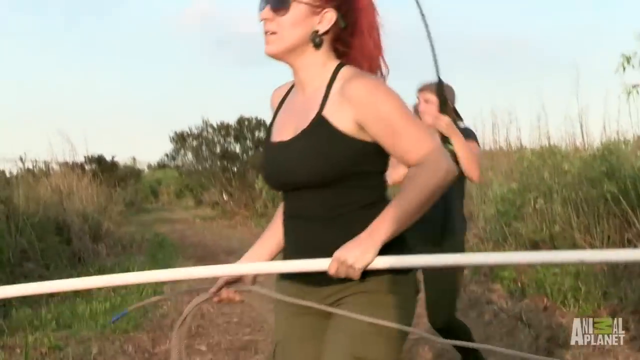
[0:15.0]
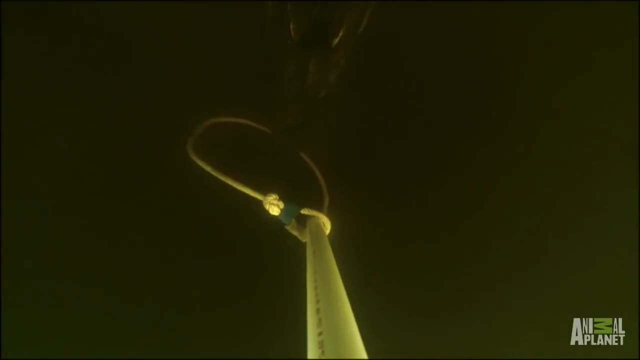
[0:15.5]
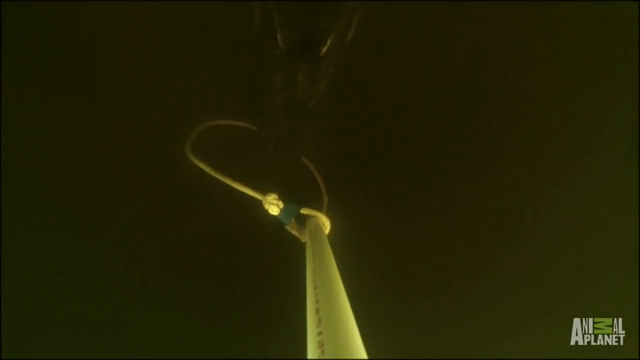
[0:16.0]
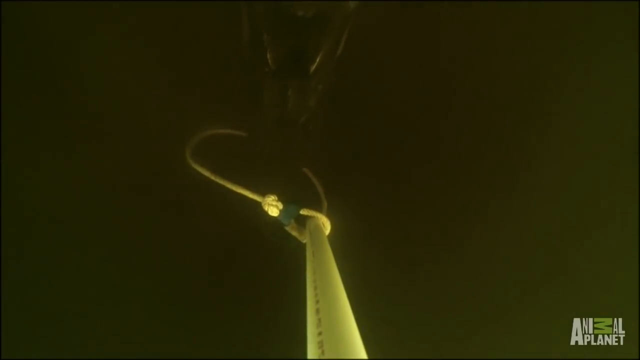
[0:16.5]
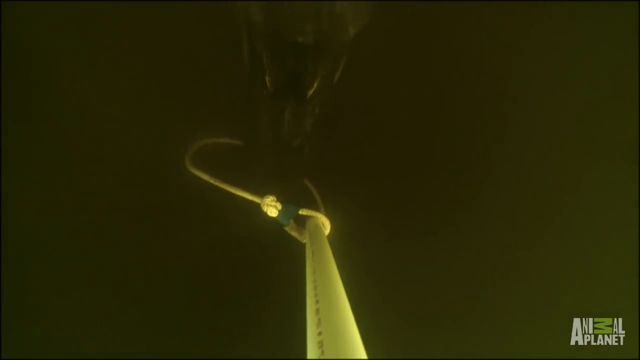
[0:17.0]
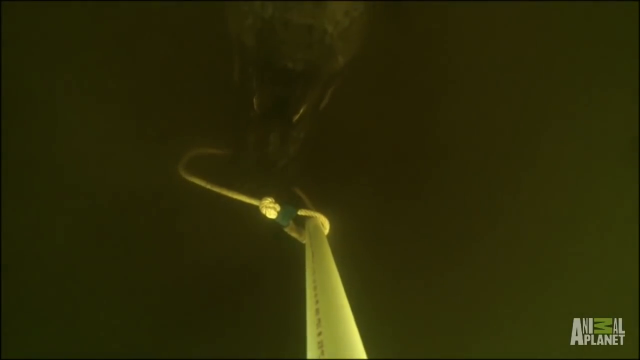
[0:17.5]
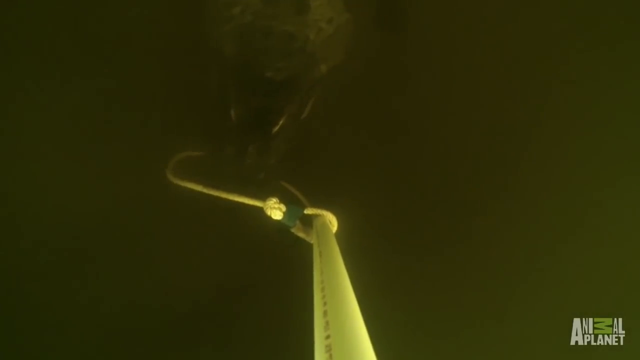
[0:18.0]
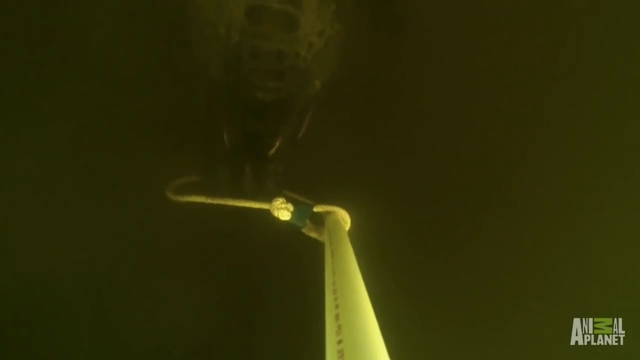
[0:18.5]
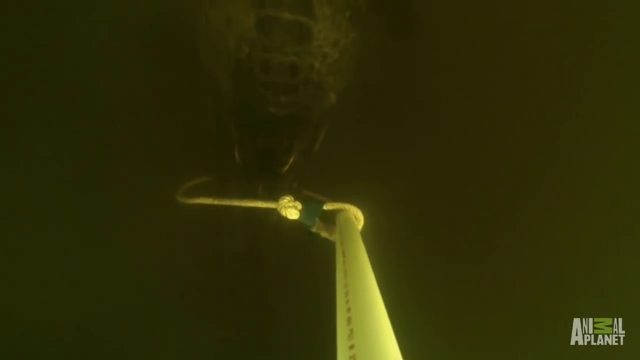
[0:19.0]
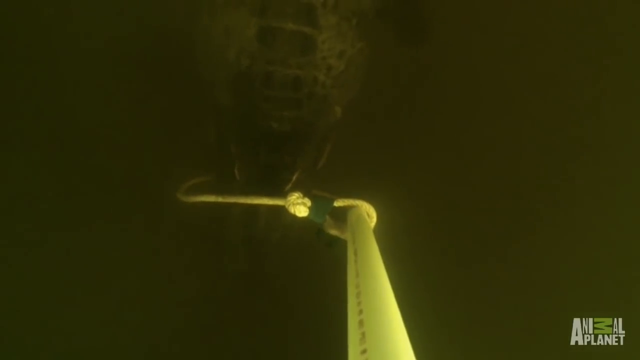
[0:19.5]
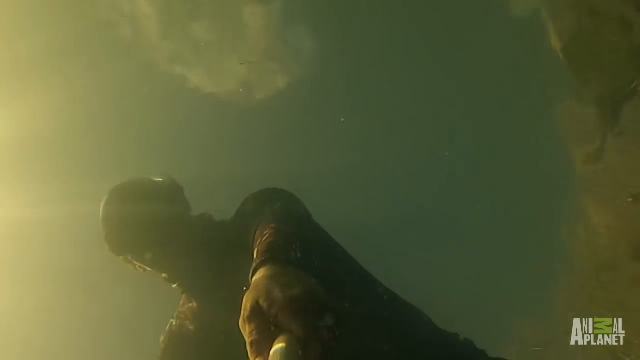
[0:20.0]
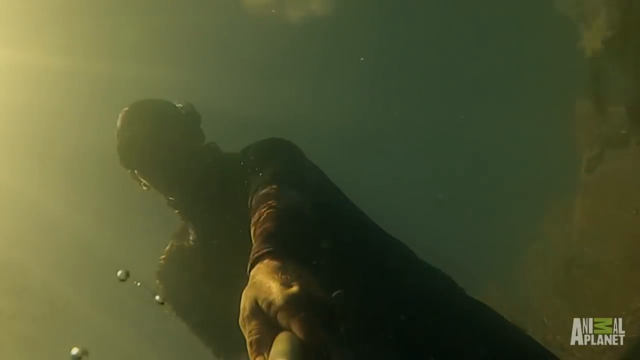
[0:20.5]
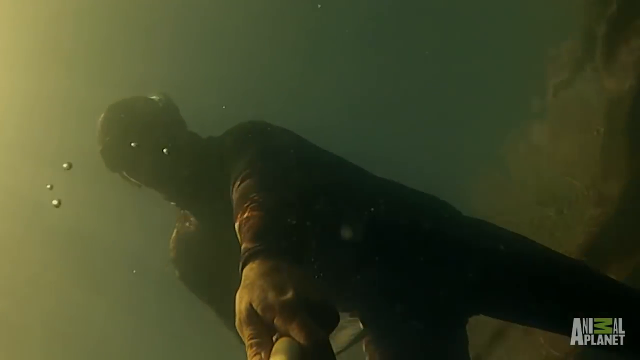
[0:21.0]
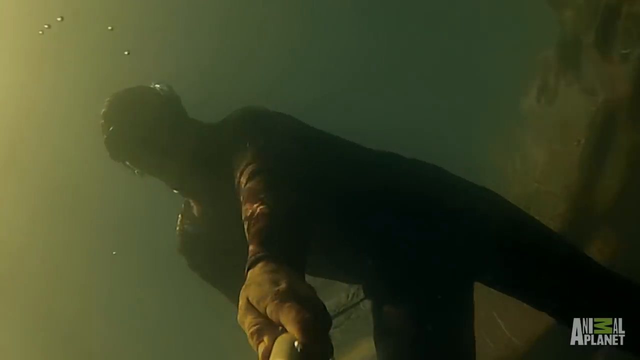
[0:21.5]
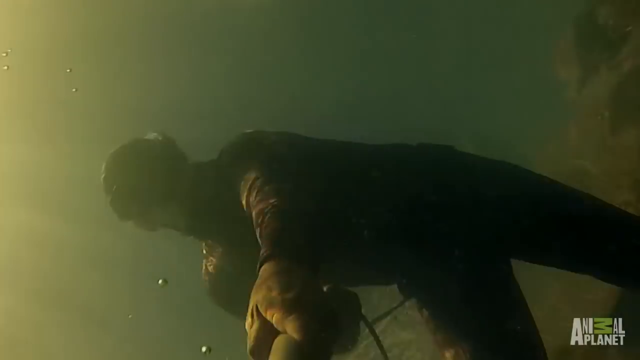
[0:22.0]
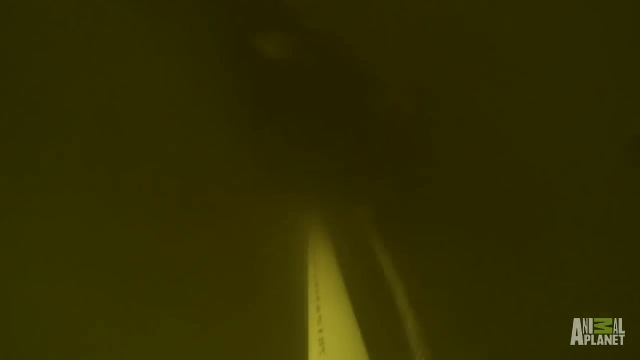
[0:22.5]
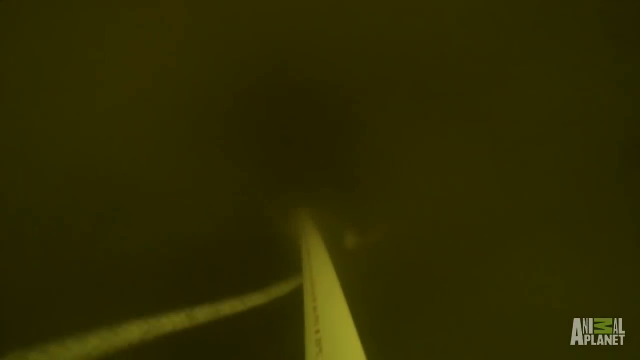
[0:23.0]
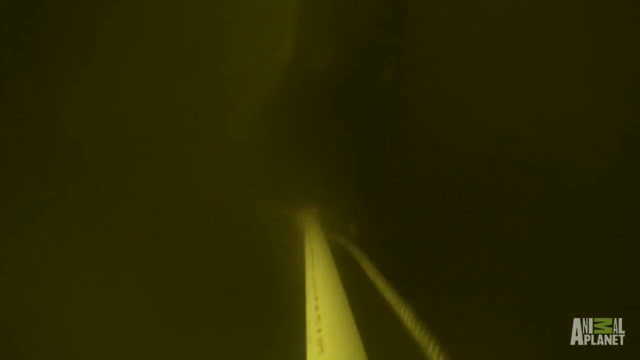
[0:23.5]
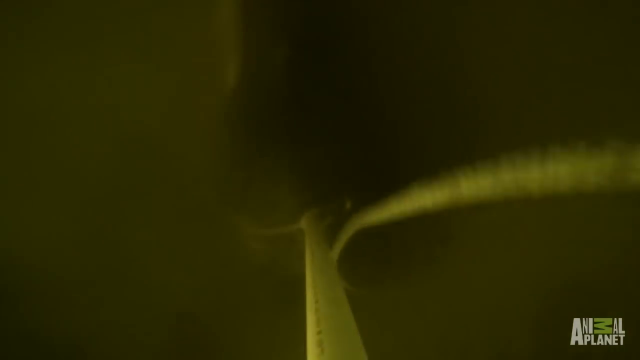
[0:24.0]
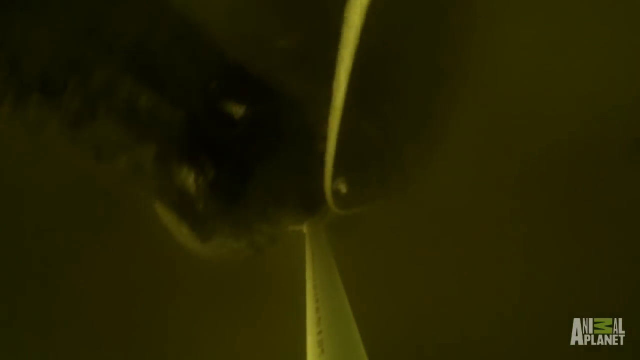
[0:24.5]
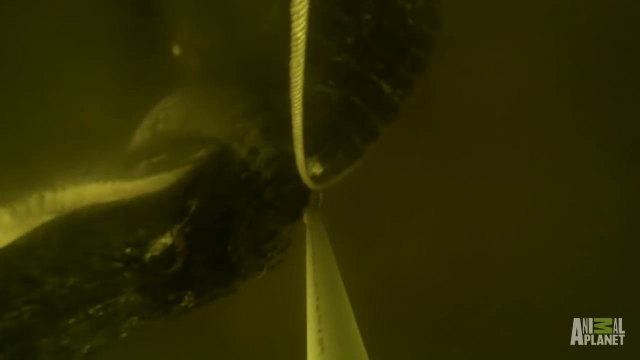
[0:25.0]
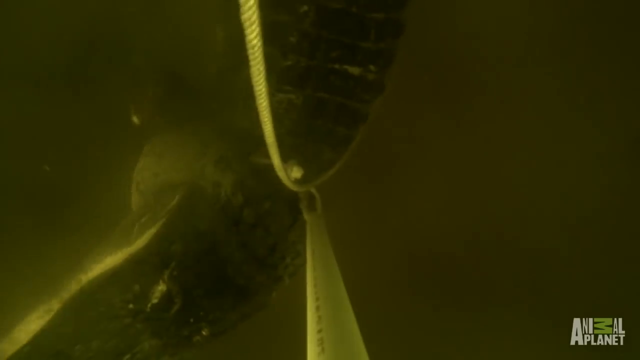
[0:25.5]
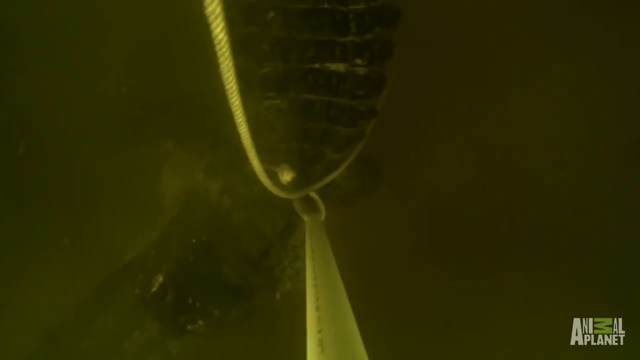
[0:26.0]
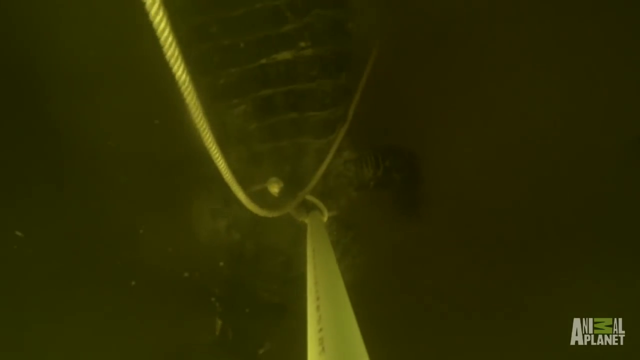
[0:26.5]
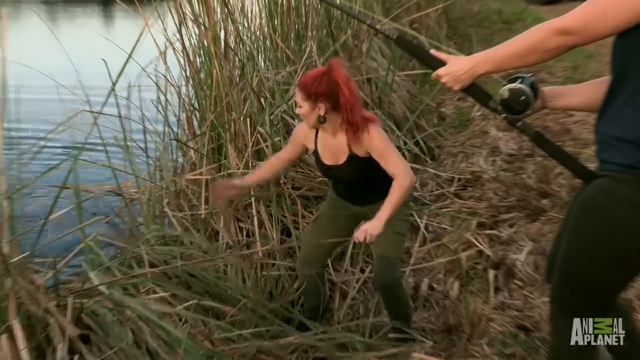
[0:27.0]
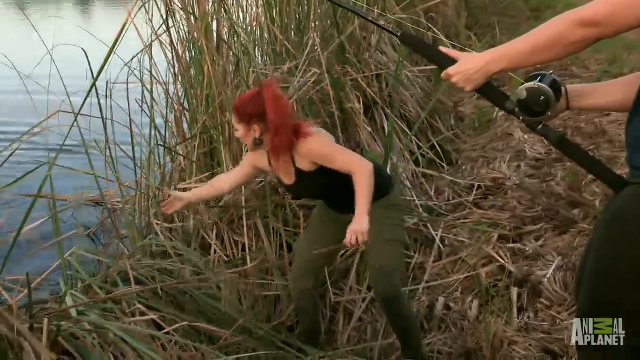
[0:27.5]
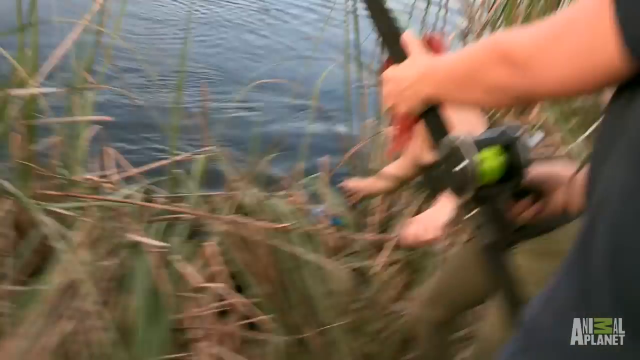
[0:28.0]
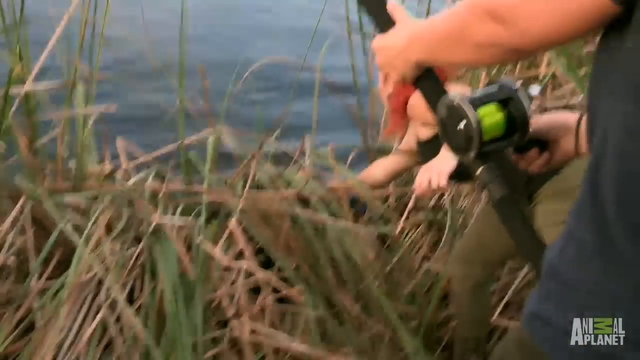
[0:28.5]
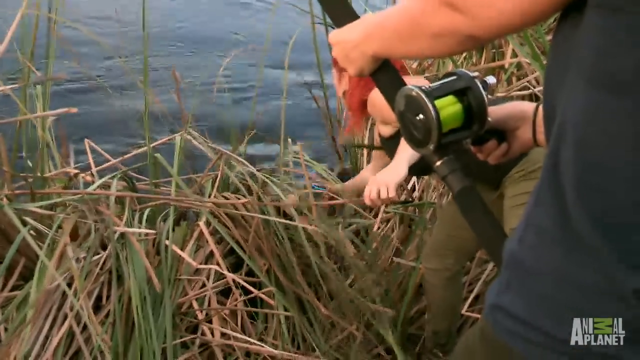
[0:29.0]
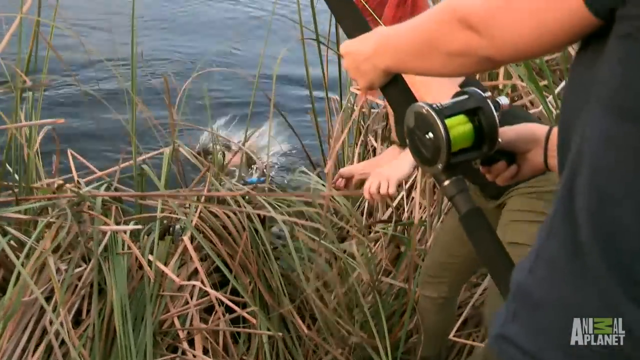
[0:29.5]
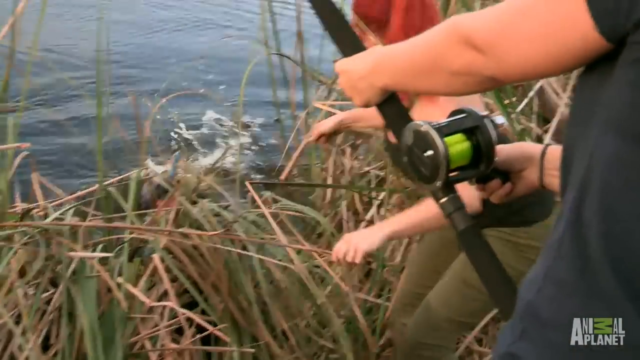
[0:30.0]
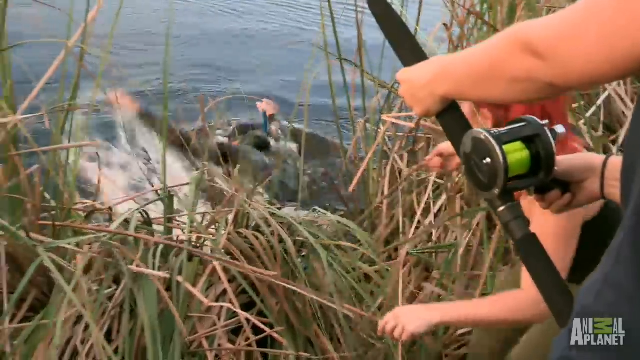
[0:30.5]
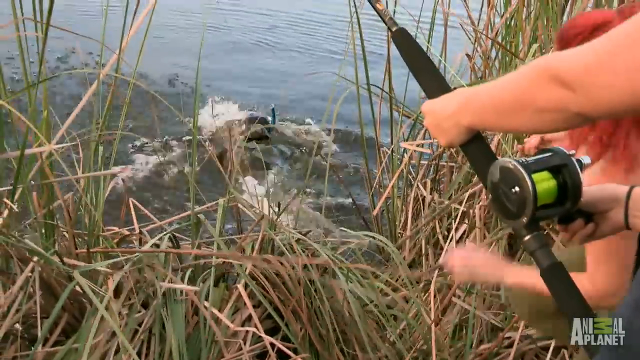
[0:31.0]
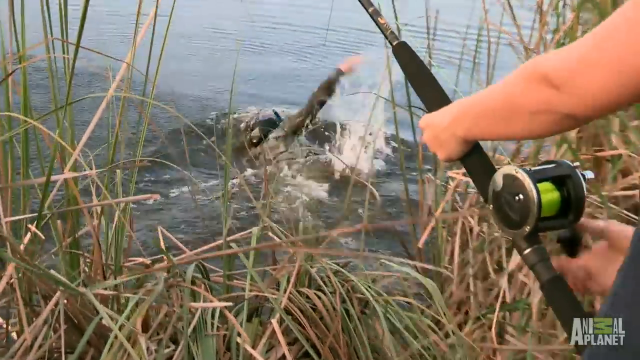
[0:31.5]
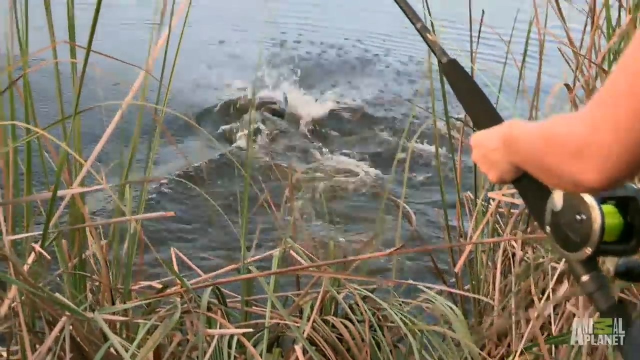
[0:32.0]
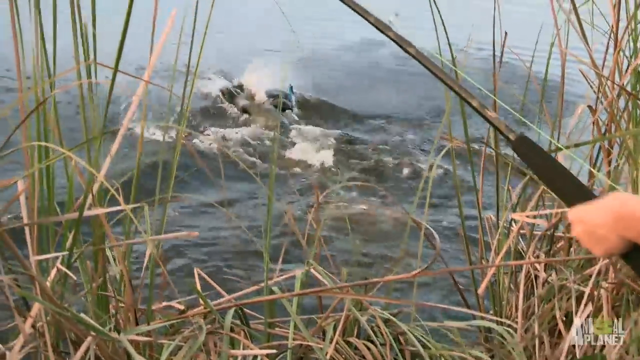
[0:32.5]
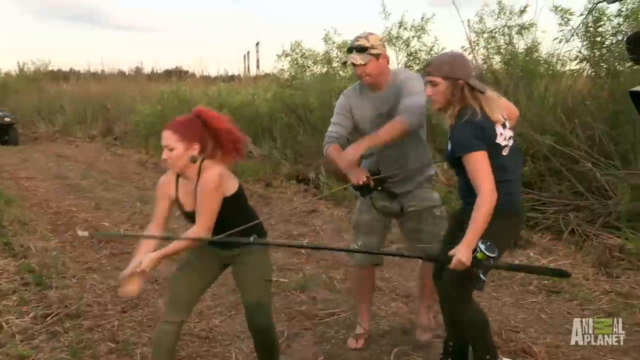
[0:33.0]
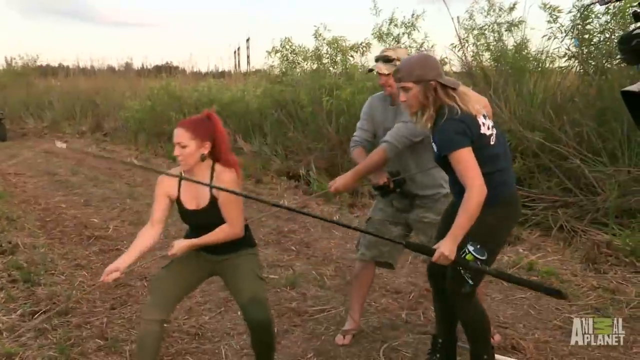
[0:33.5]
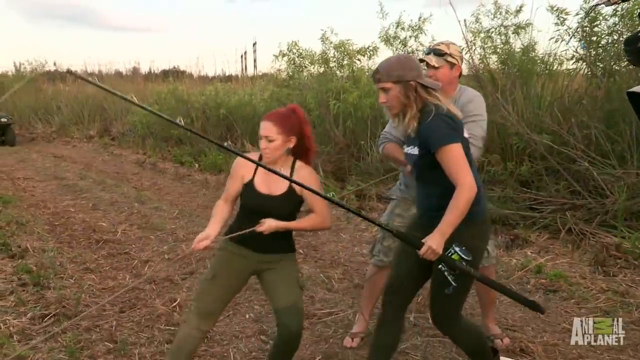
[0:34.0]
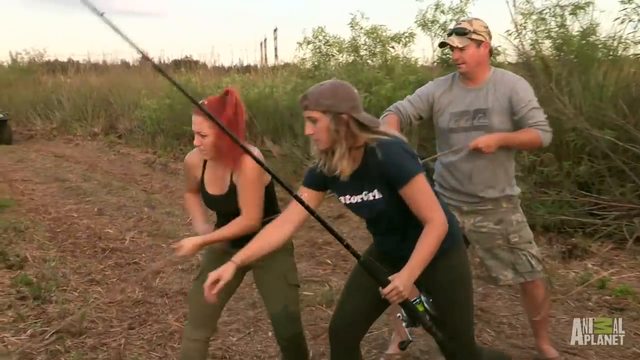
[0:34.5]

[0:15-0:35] A yellow rope, kind of shaped like a lasso with a sliding slipknot, is in murky water, and what looks like an alligator sticks its snout through the loop at the end of the rope. The camera switches to what looks like a man in a long-sleeve get-up pulling on the rope, apparently wrangling the alligator. It cuts back to a murky underwater camera shot where the gator appears to have been lassoed around the neck, and the rope tightens around its body. The camera then switches to a woman with bright red hair standing in the reeds, leaning over and pulling the rope; she wears a black tank top and olive-colored pants. Just past the reeds, the alligator thrashes in the water with a man who appears to be swimming and maybe wrangling the alligator as well. The scene switches to three people, one man and two women, pulling the rope; one of them is also holding a fishing rod.